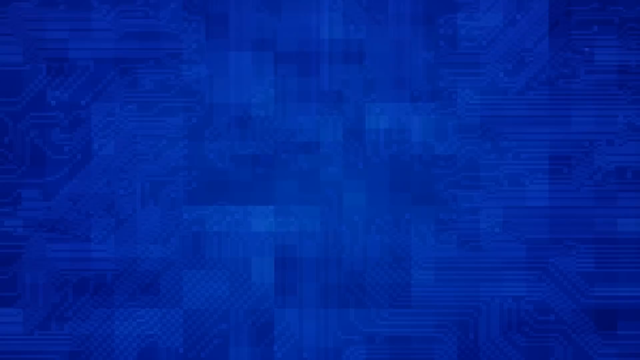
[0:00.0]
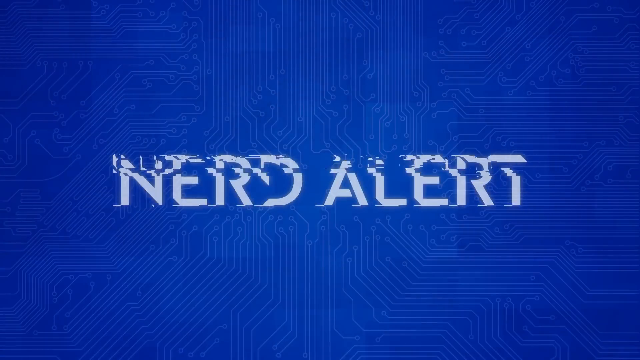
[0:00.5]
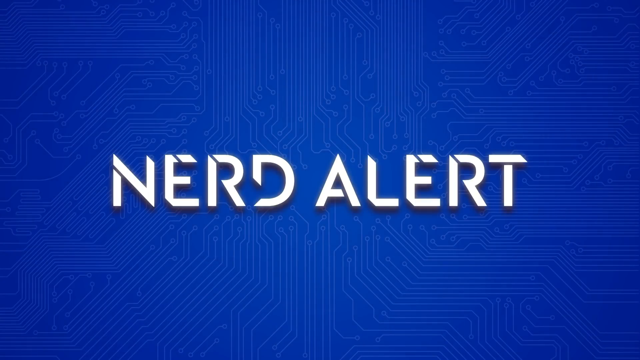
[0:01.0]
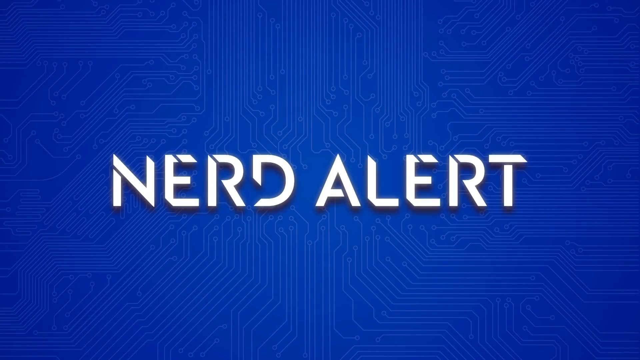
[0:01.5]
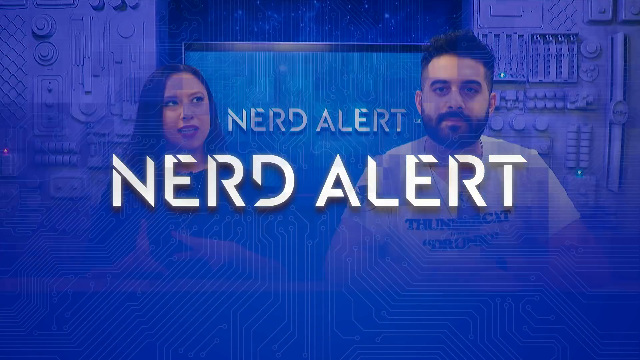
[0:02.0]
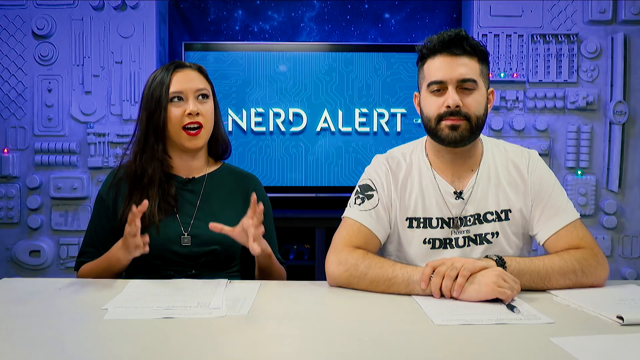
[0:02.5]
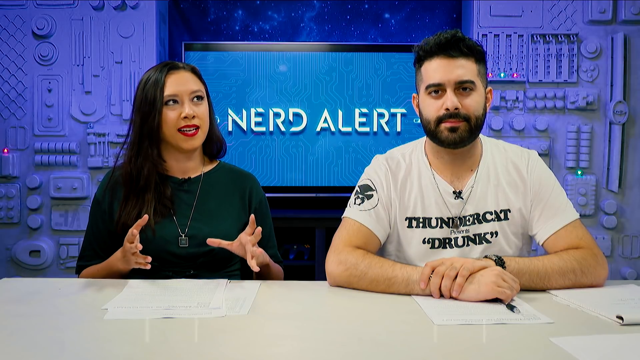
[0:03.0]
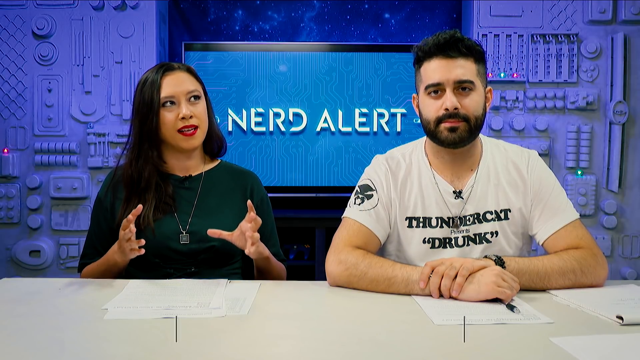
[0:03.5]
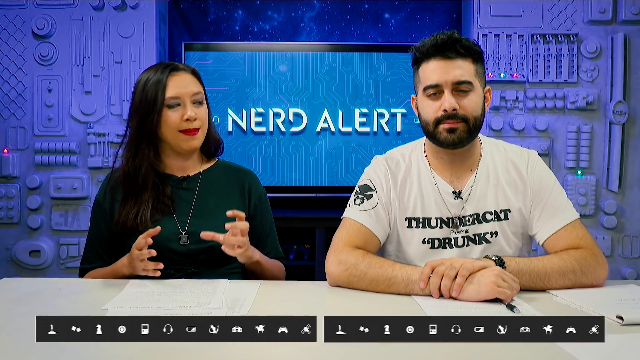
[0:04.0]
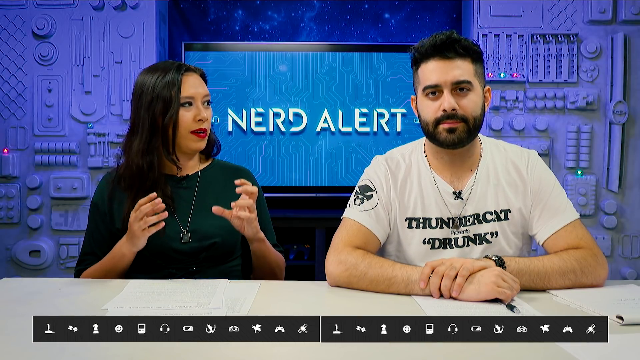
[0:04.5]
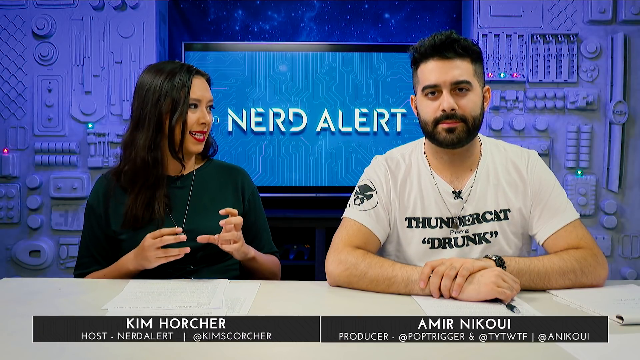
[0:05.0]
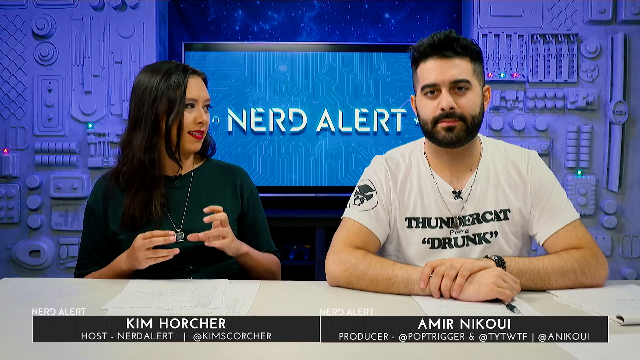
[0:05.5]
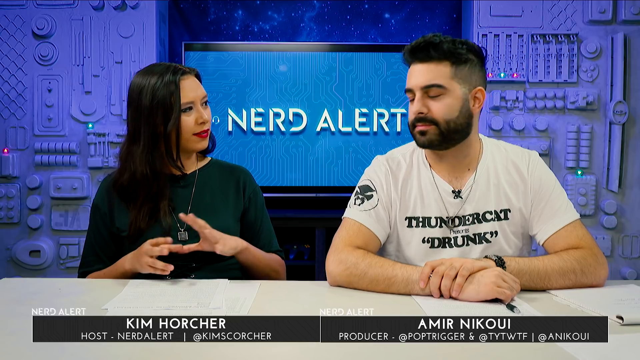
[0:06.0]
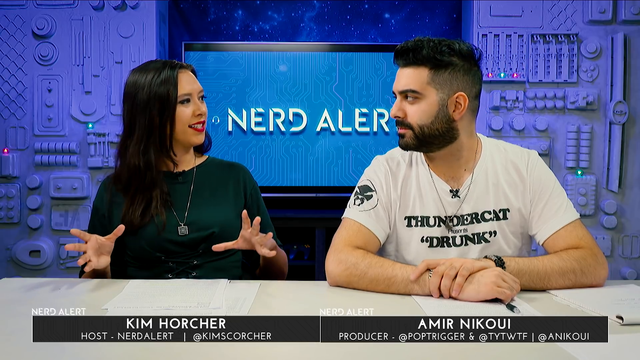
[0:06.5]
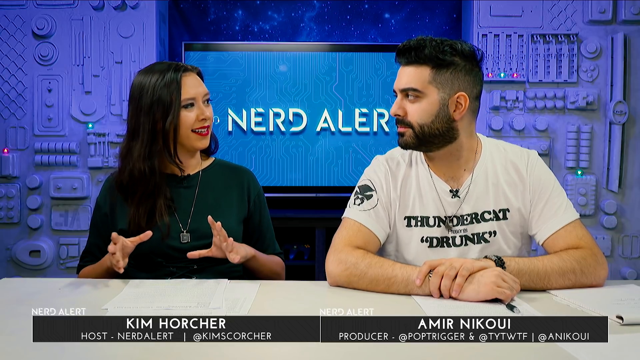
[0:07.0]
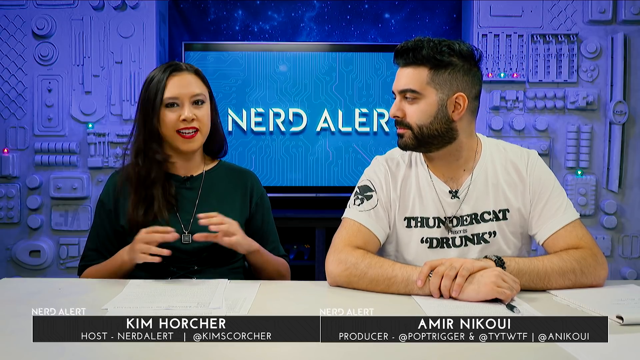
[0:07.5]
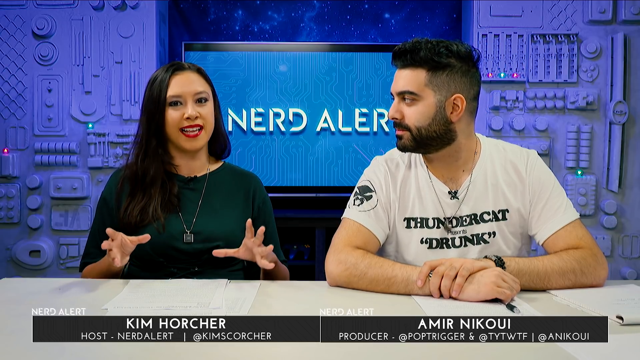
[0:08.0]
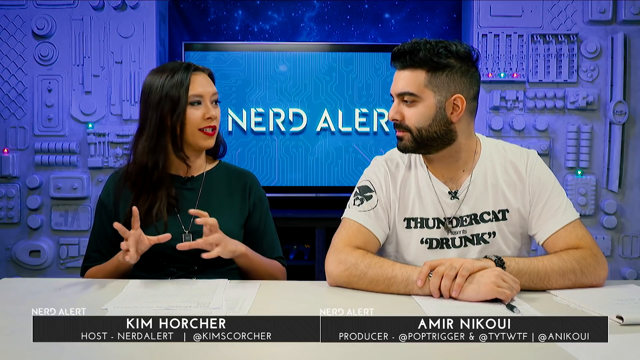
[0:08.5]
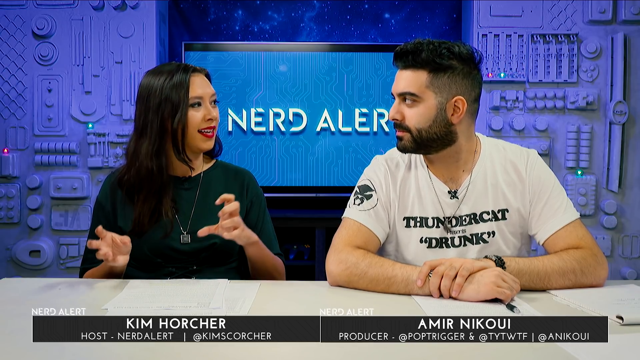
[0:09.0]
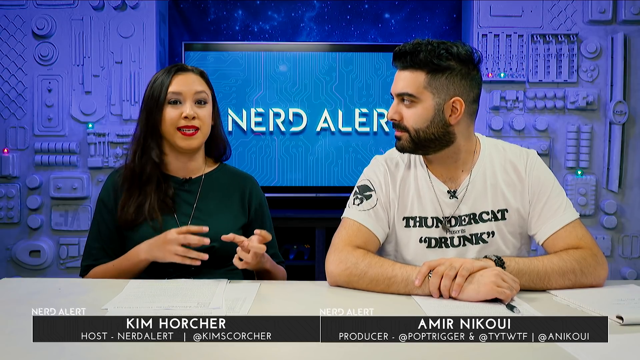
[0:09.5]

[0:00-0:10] A navy blue background with some stripes and shapes appears, with text written in white in a handwritten font. A close-up then shows a man and a woman. The woman wears a dark green top and a silver necklace with a box-shaped pendant, and she has long, above-shoulder-length black hair. She wears makeup, including red lipstick, with her eyebrows done and black eyelashes. The man wears a white t-shirt, a necklace and a microphone clipped to his t-shirt, and on the right side of the t-shirt there is a logo on his arm. Across the top front of his t-shirt is written "Thundercat Drunk" in black, in a font that looks like handwriting. He has a mohawk haircut, longer in the middle and very short on the sides, and a black beard and moustache around his mouth. He looks about 35 years old, and the woman looks around 33. In the background there is a screen reading "Nerd Alert" and some white items that look like they are for electricity. Their names are written at the bottom in white on a black background: the woman is "Kim" and the man is "Amiri".